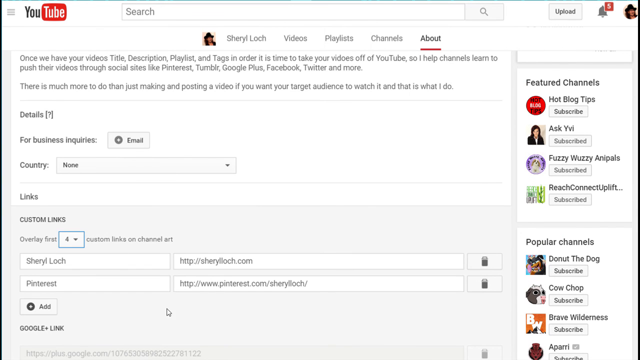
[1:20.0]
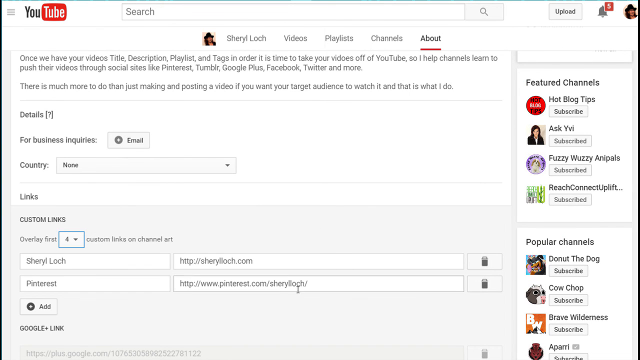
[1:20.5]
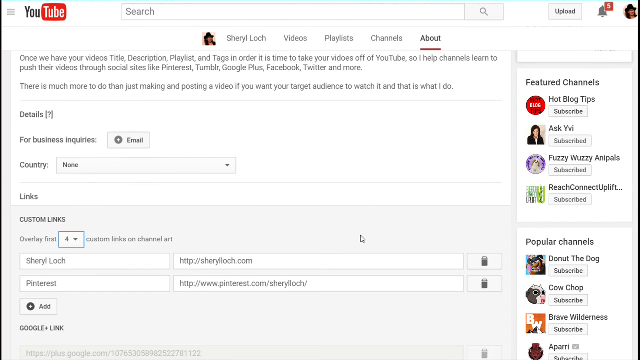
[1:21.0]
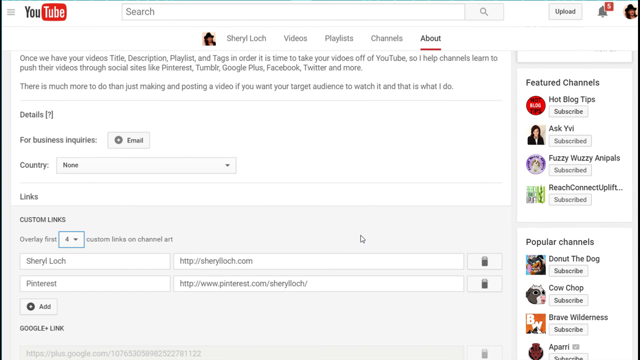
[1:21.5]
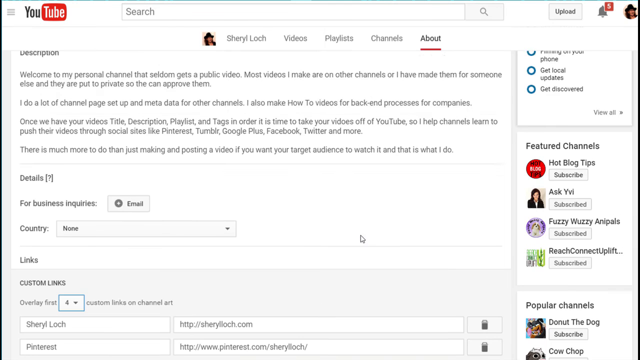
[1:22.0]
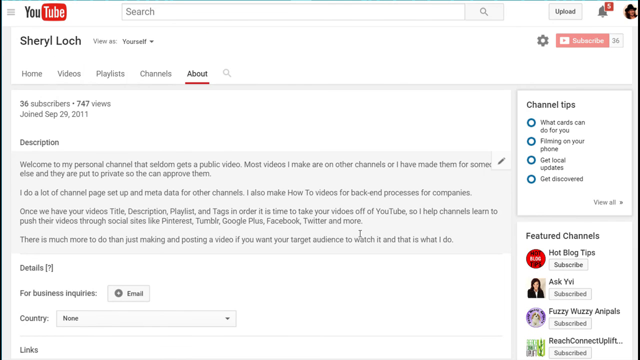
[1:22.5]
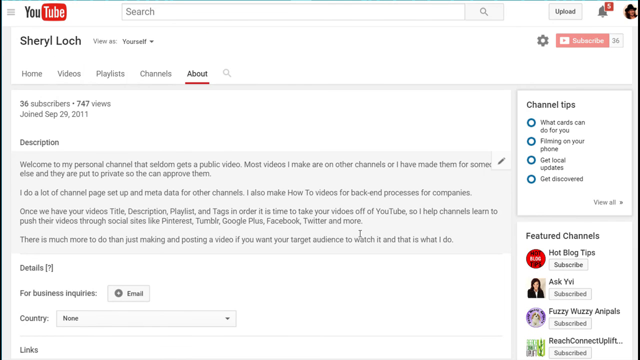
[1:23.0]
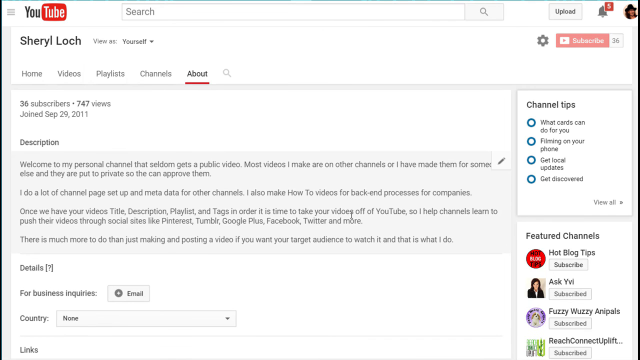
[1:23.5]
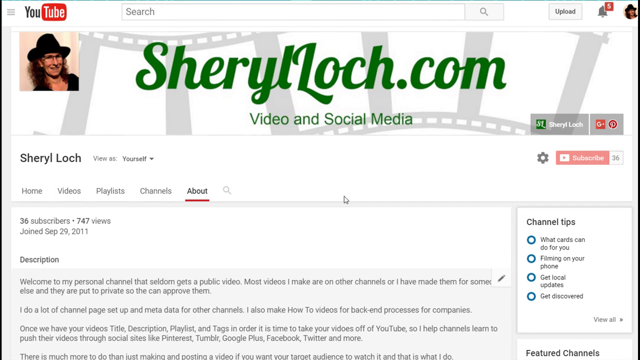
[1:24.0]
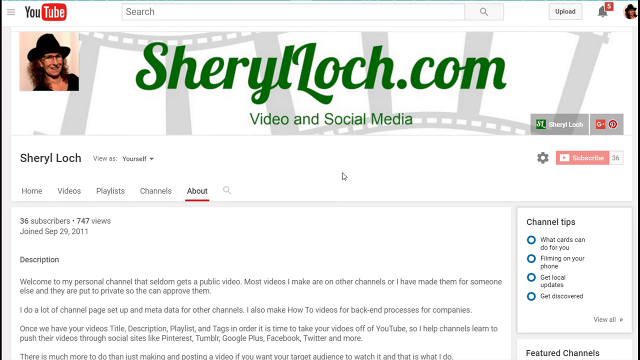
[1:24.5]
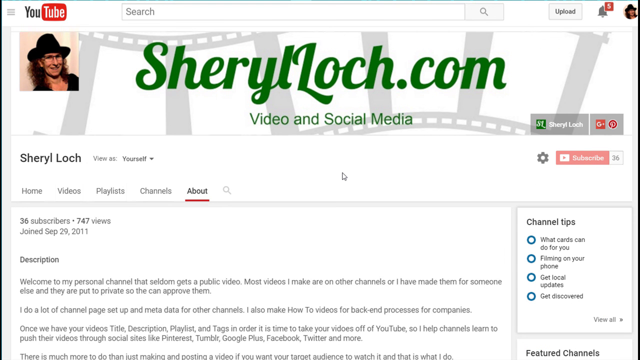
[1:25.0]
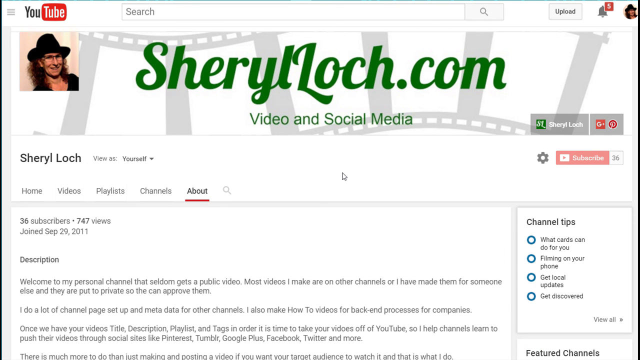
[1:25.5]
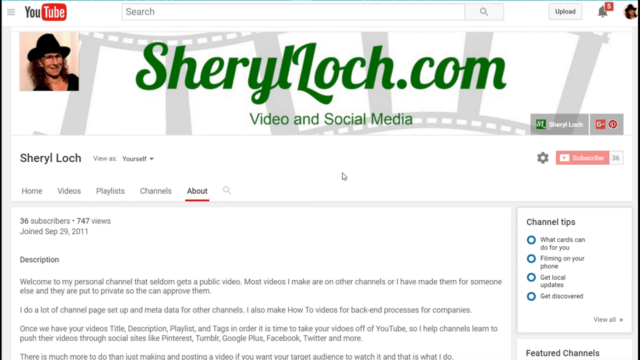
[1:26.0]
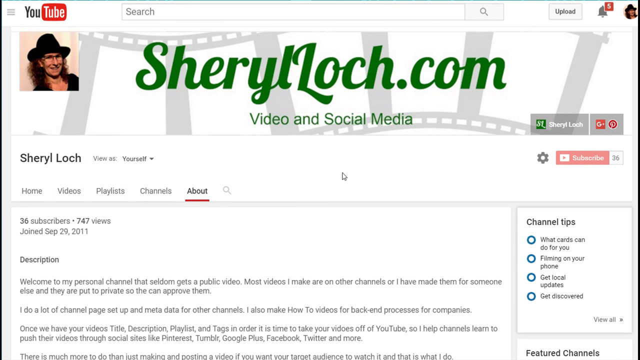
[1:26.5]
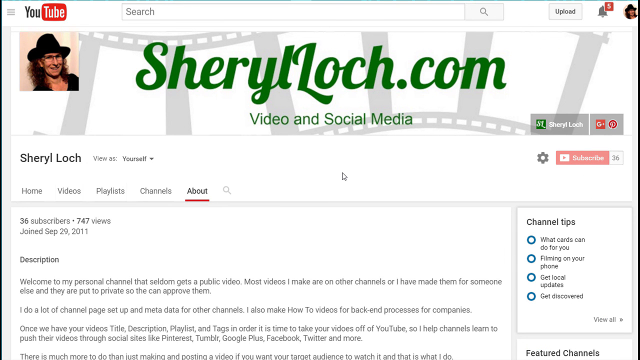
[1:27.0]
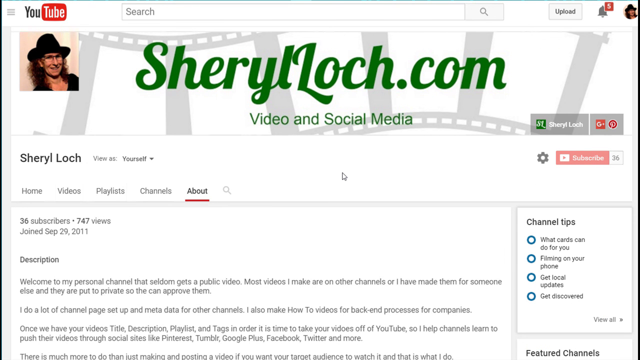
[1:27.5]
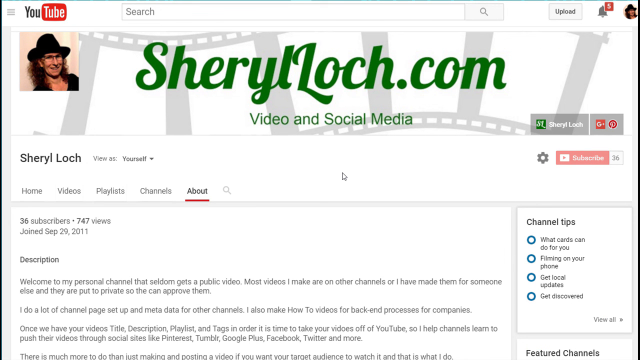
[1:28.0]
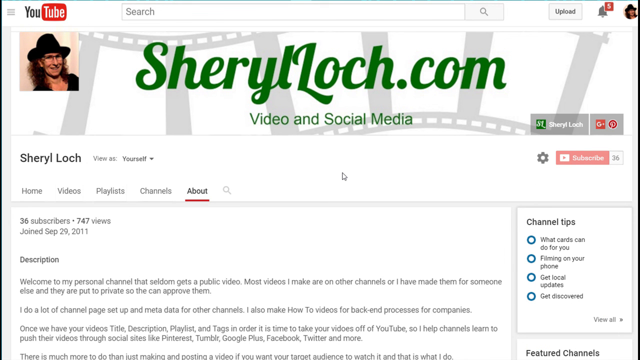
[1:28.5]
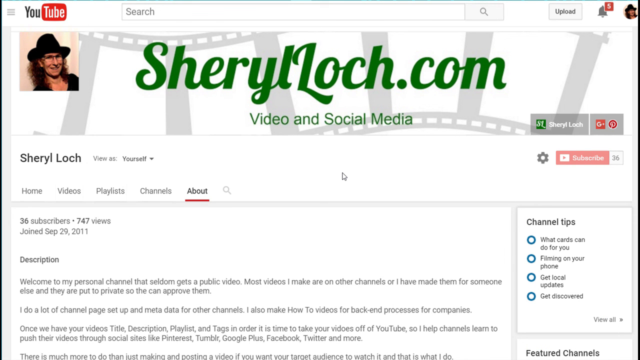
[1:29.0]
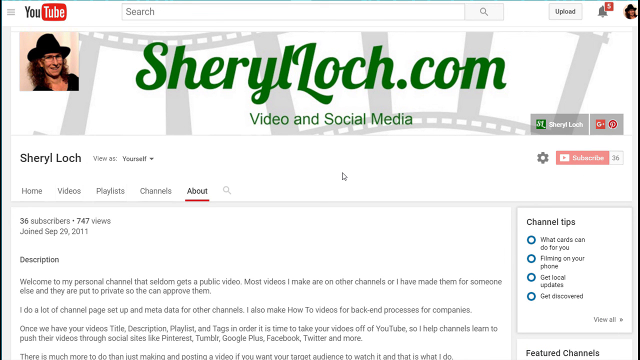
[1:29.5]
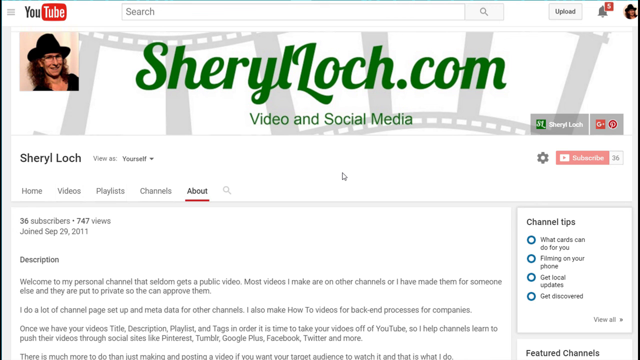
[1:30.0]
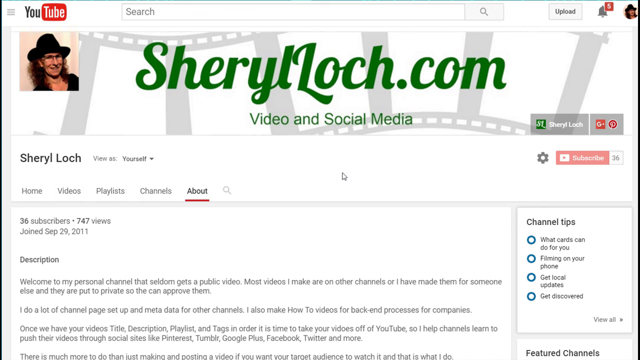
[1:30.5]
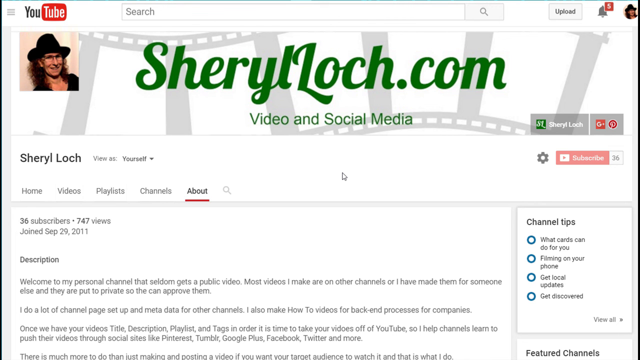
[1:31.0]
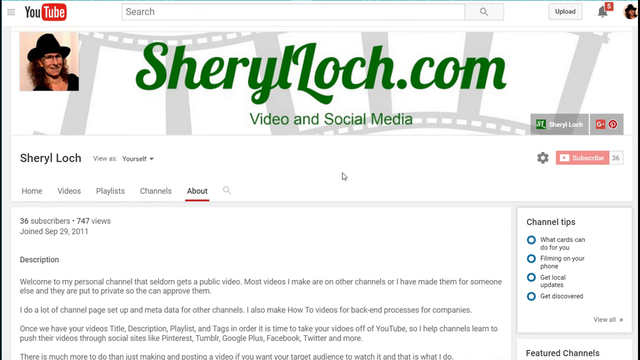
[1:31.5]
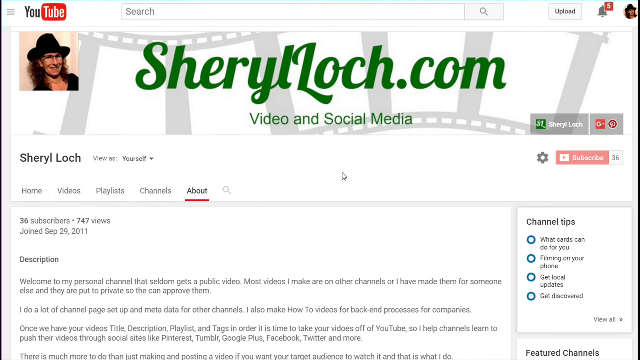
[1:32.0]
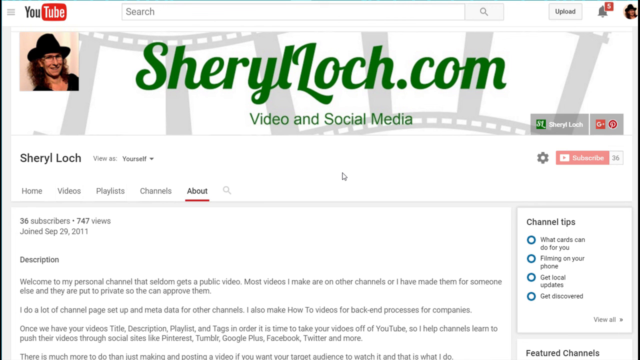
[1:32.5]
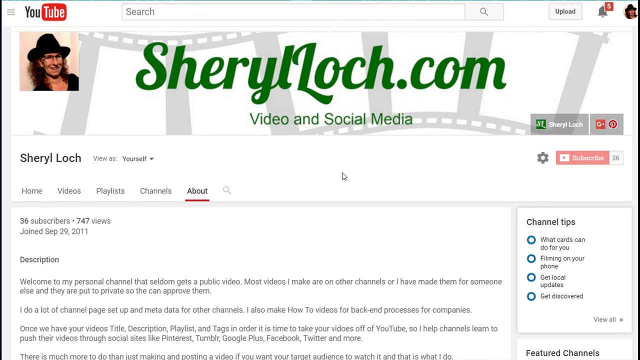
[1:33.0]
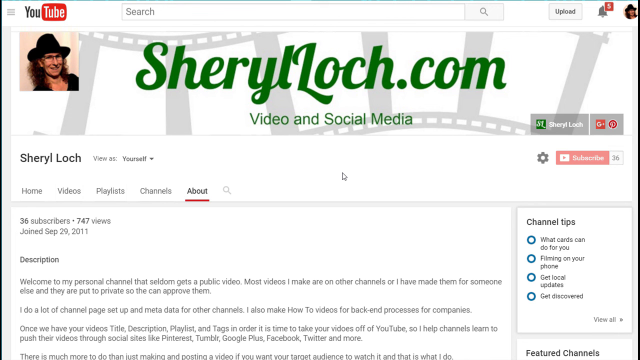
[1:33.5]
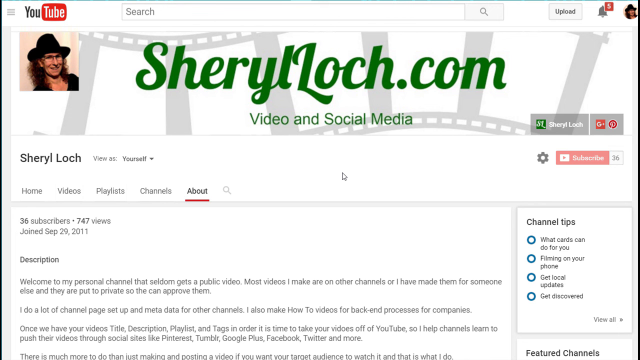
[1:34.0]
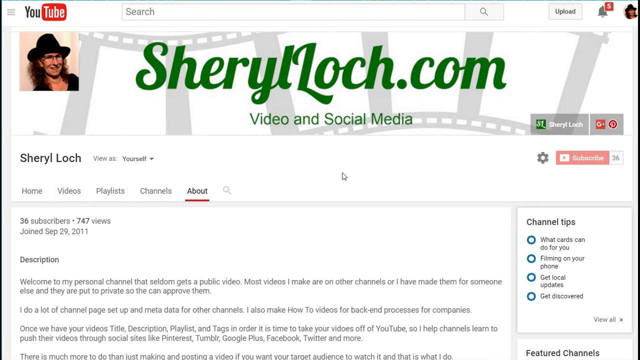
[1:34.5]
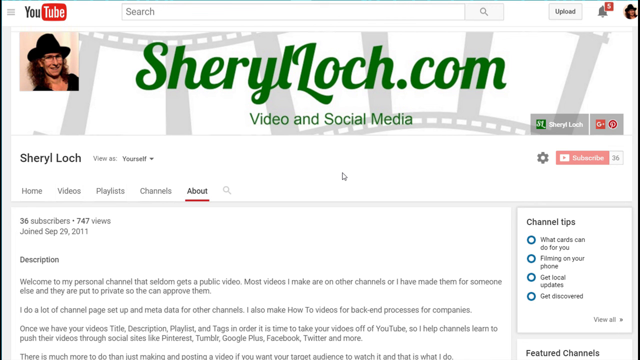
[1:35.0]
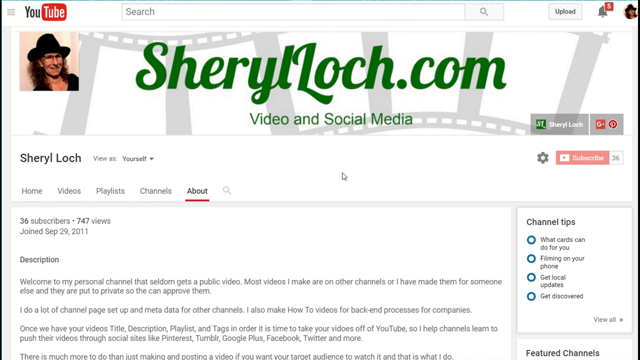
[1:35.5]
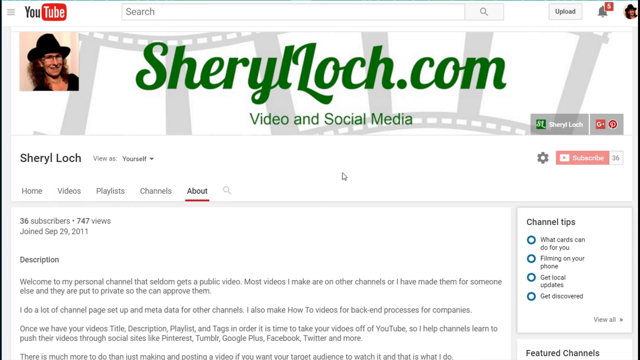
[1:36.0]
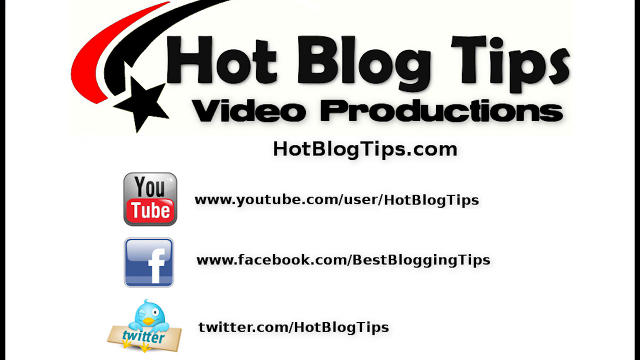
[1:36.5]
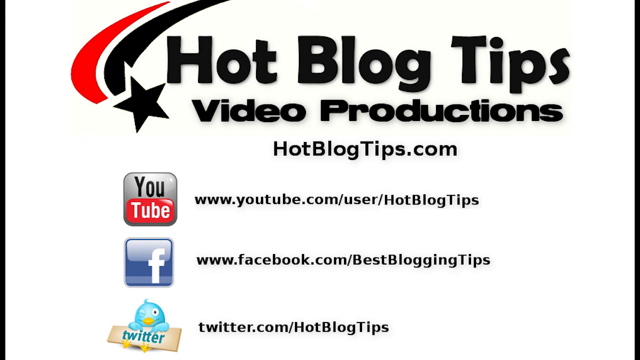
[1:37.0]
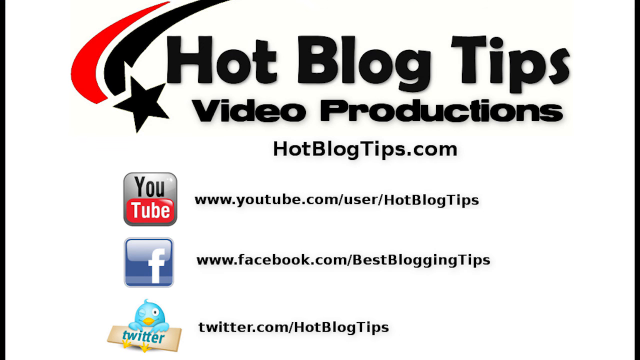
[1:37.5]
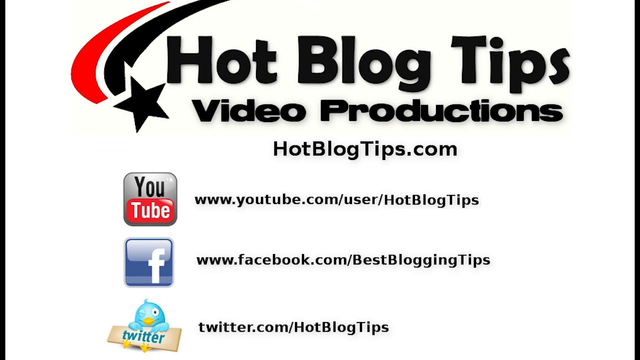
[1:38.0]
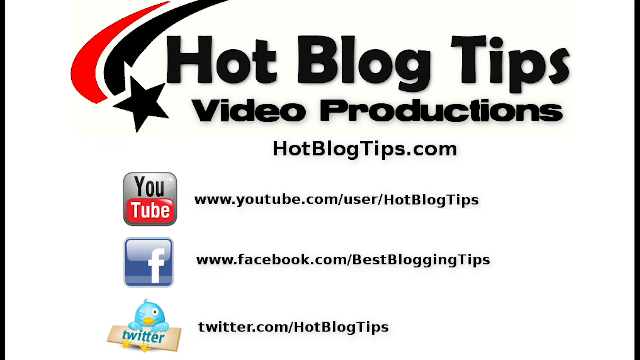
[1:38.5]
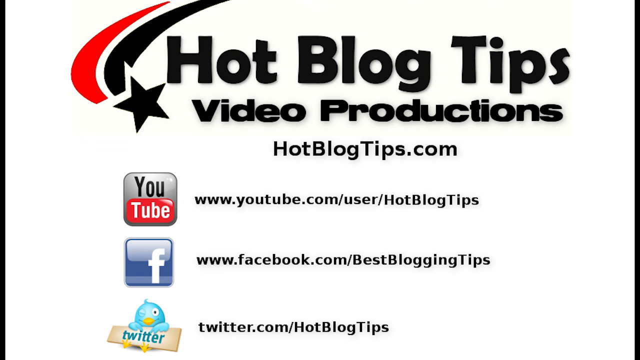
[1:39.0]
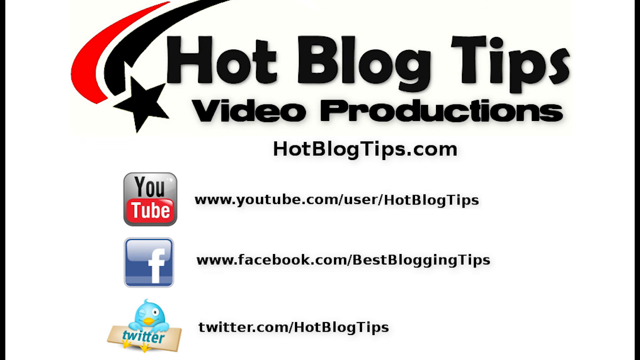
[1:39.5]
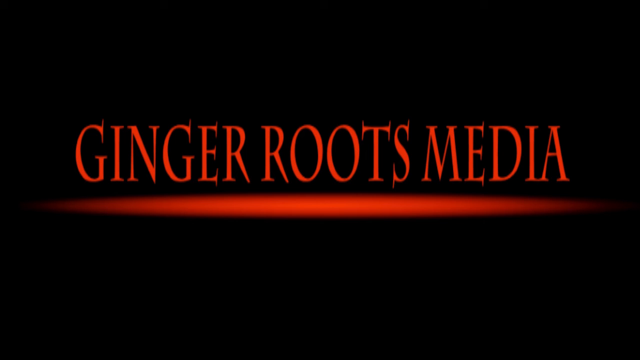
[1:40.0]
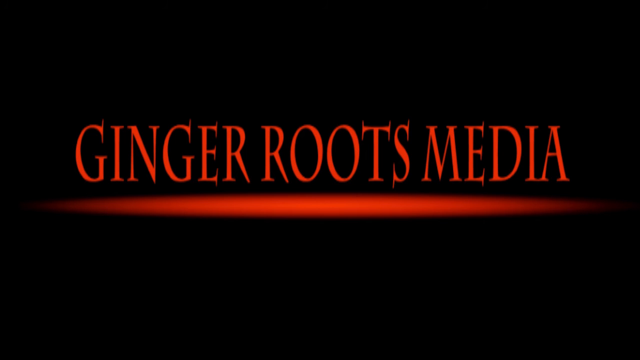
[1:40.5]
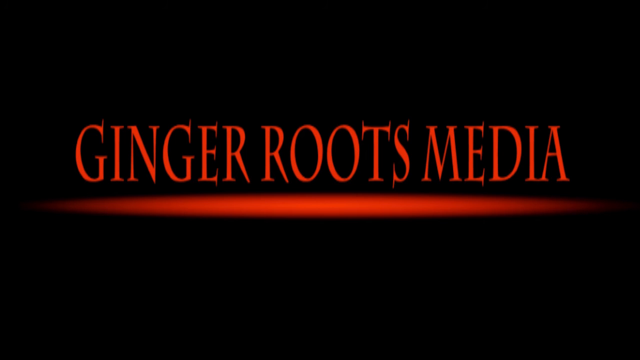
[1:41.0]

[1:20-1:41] The homepage of CherylLocke.com video and social media is shown. The introduction underneath the Cheryl Locke name welcomes people and includes the text "most videos I make are on other channels or I have them made for someone else and they are put to private". It also says "once we have your videos title, description, playlist and tags in order it is time to take your videos off YouTube so I help channels learn to push their videos through social sites like Pinterest, Tumblr, Google+, Facebook, Twitter and more. There is much more to do than just making and posting a video. If you want your target audience to watch it and that is what I do".